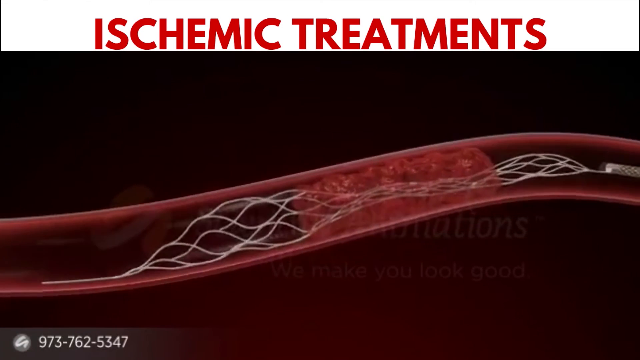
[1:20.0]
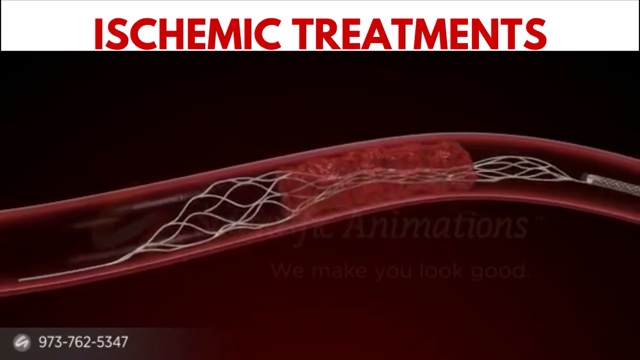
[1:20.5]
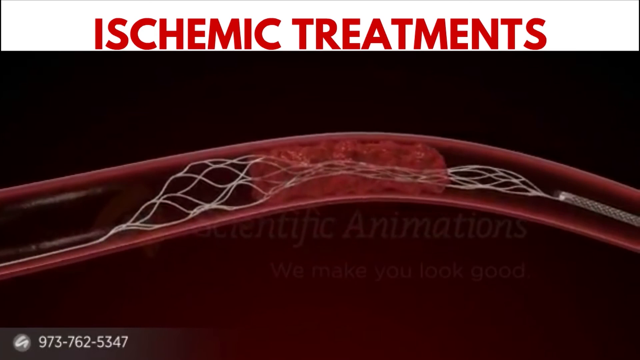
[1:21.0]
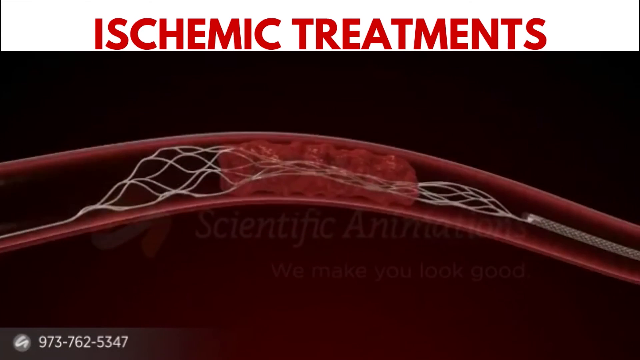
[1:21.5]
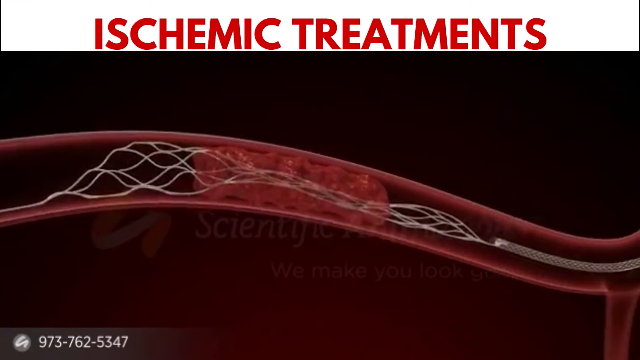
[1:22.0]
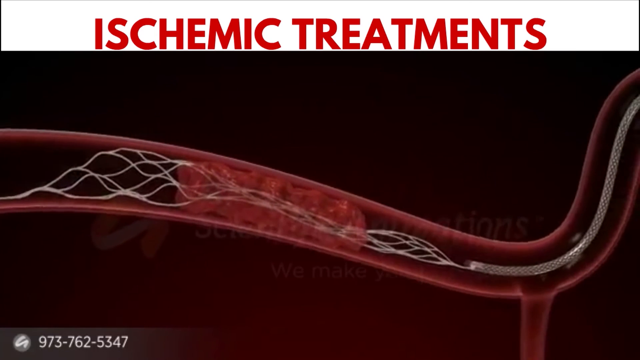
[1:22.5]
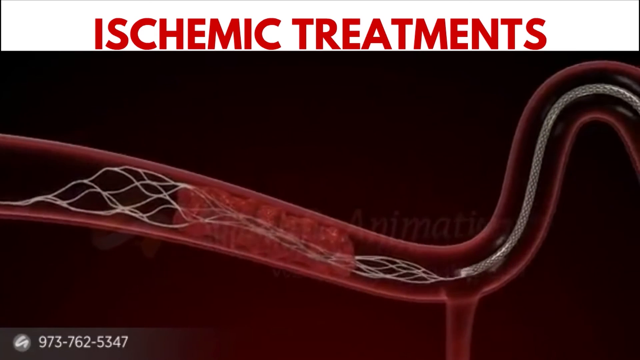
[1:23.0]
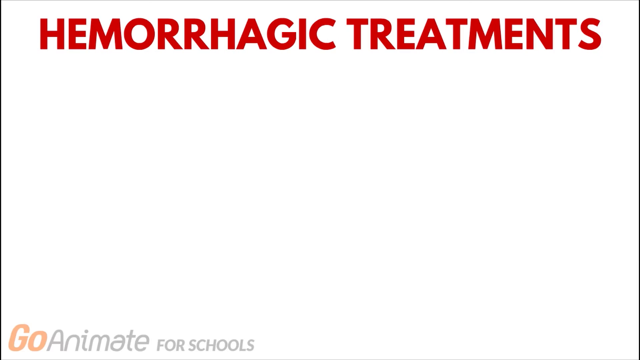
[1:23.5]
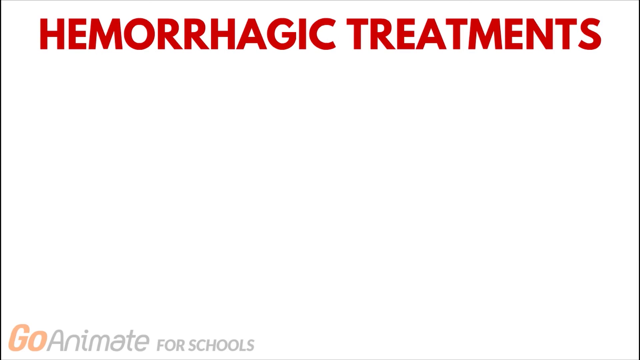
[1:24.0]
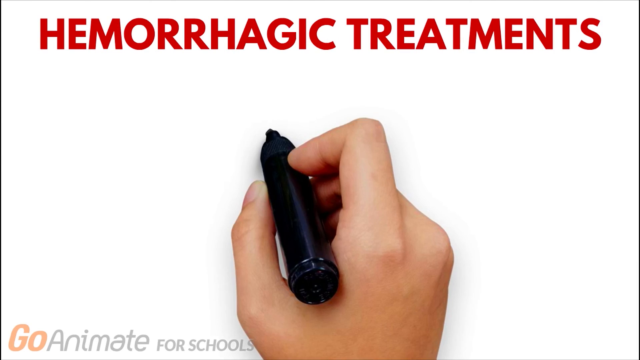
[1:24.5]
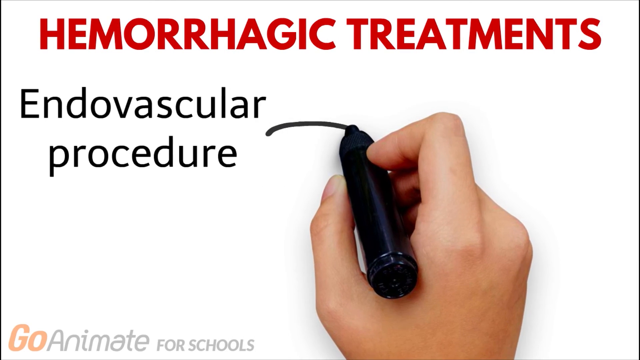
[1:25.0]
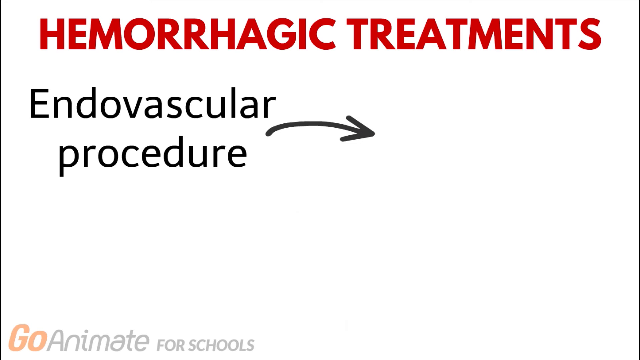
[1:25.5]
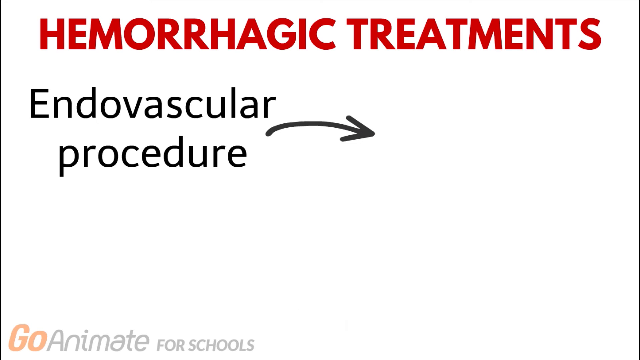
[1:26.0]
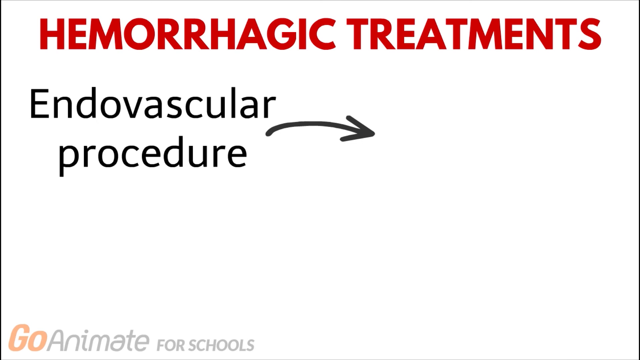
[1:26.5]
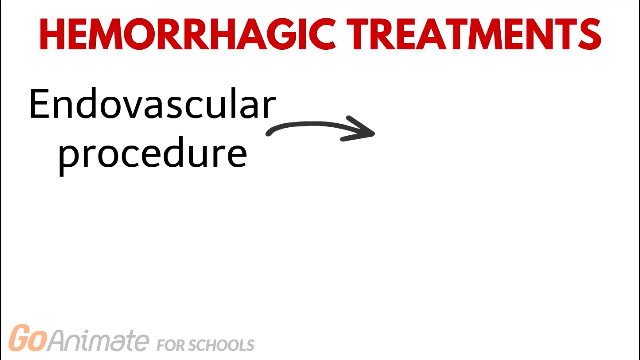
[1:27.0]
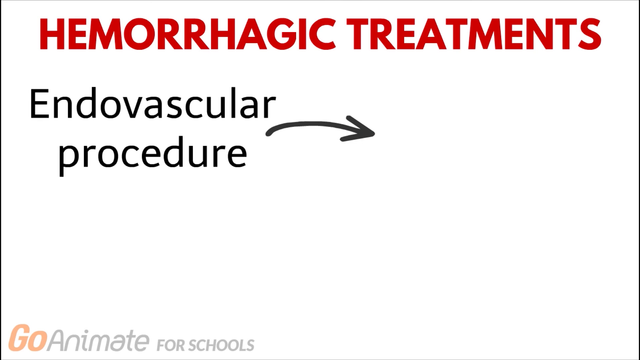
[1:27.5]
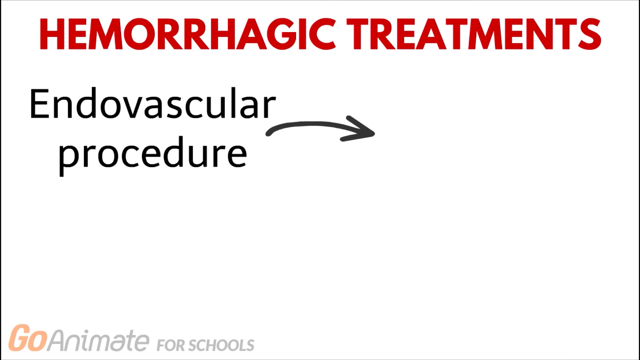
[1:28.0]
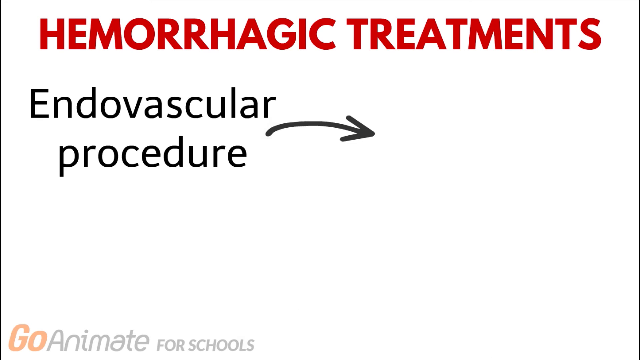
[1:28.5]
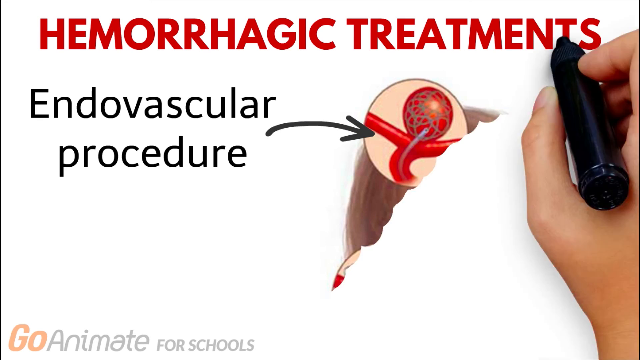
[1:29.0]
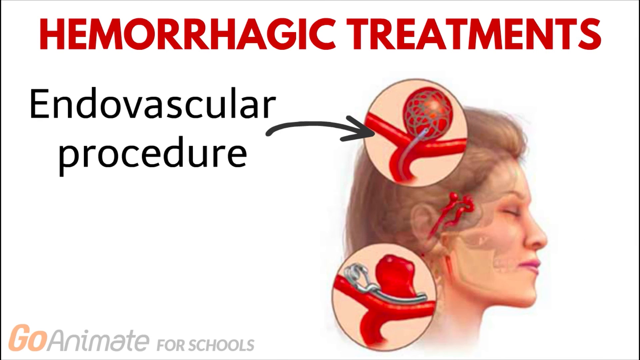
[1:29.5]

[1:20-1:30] A picture of a vein shows it open on the right side and on the left side and closed in the center of the screen, with "ischemic treatments" in red at the top. The vein moves, and movement through the vein is shown. Then a white screen appears with red text at the top saying "hemorrhagic treatments," and a Caucasian hand with a black marker writes "endovascular procedure" with an arrow pointing toward the right. The hand draws the face of a female patient with her eyes closed, with an anatomical picture over the top of her head showing a vein that has hemorrhaged and is no longer straight, with a balloon-like shape coming off the top of it. There is another anatomical picture at the bottom of her hair. Then the screen says "ischemic treatments" and shows an open vein with webbing on the left and right sides of the vein.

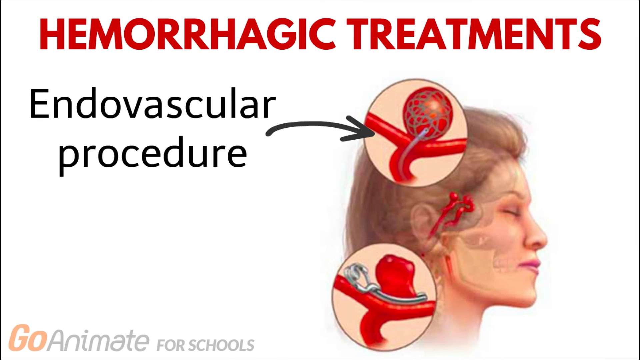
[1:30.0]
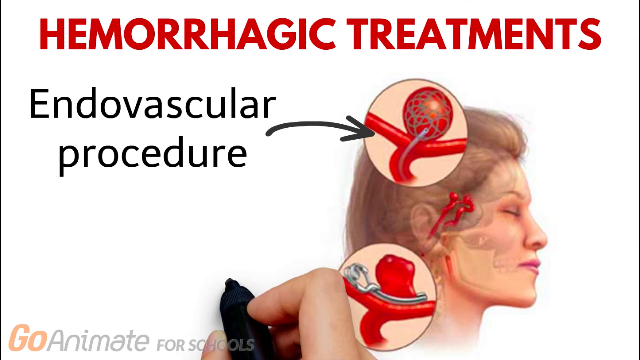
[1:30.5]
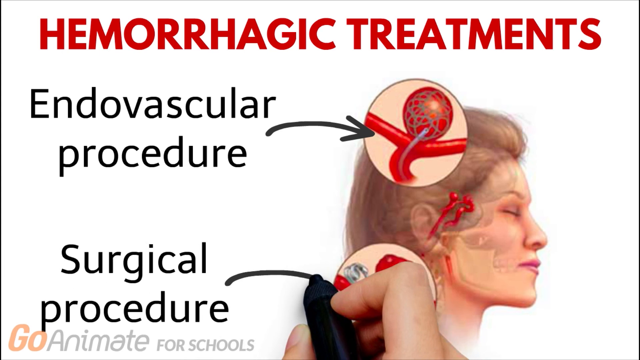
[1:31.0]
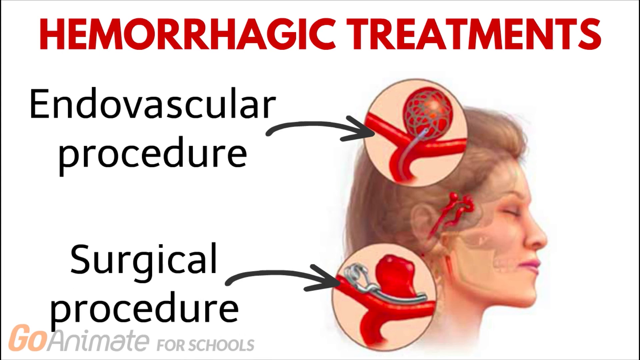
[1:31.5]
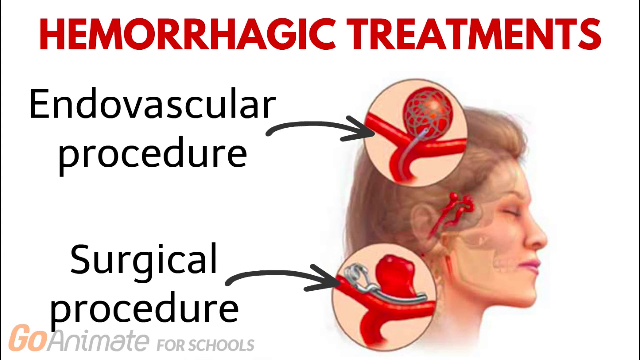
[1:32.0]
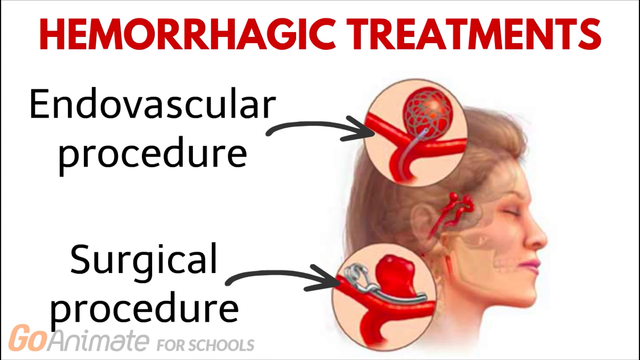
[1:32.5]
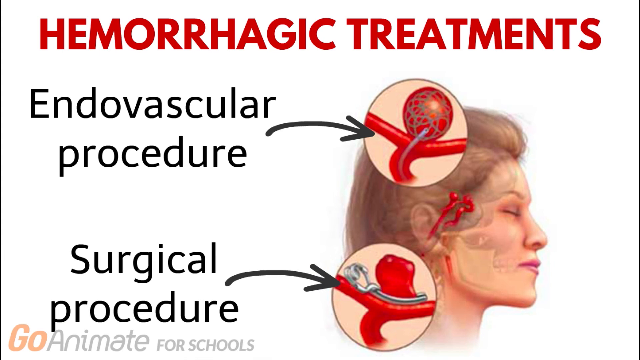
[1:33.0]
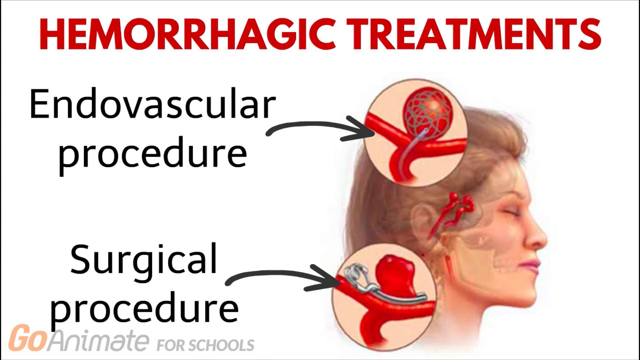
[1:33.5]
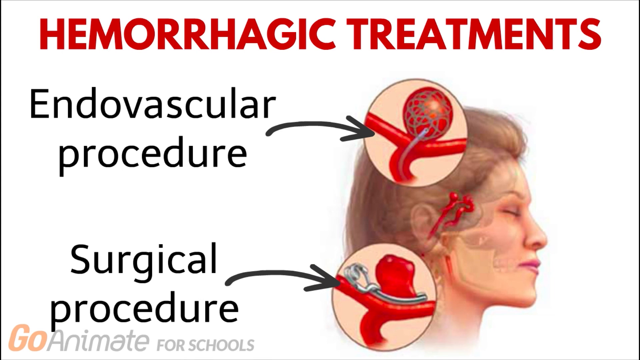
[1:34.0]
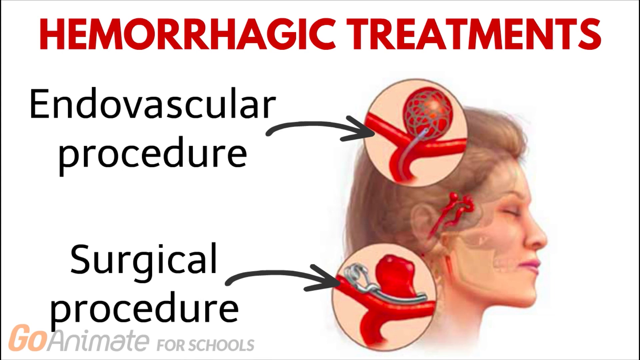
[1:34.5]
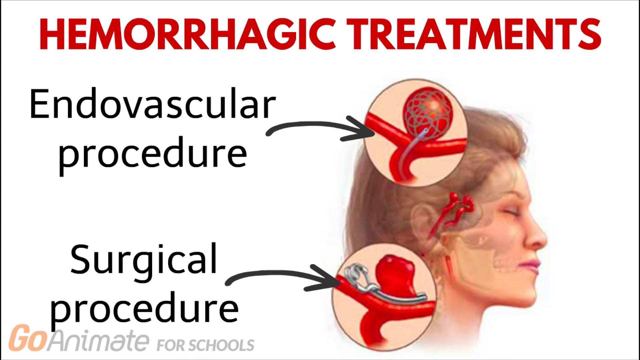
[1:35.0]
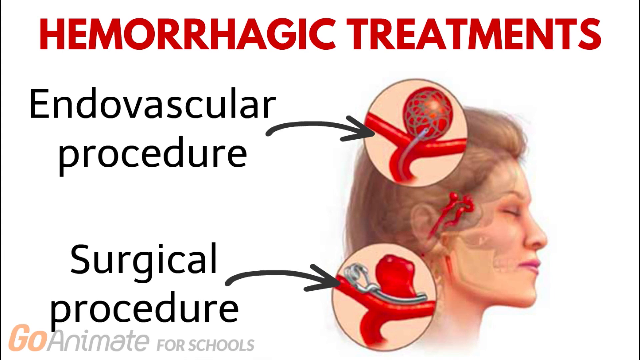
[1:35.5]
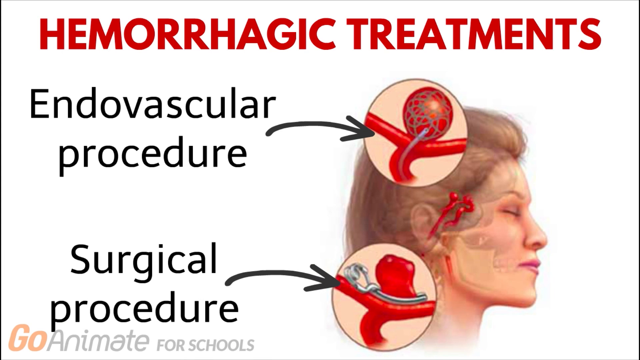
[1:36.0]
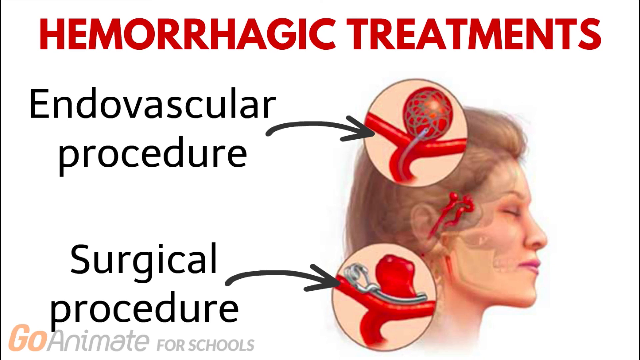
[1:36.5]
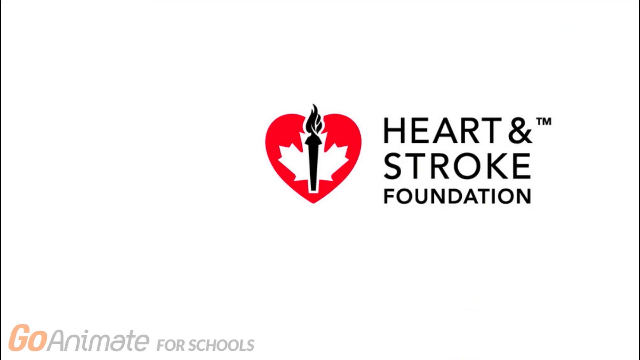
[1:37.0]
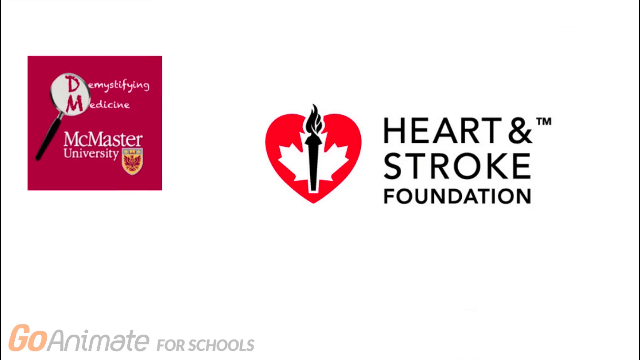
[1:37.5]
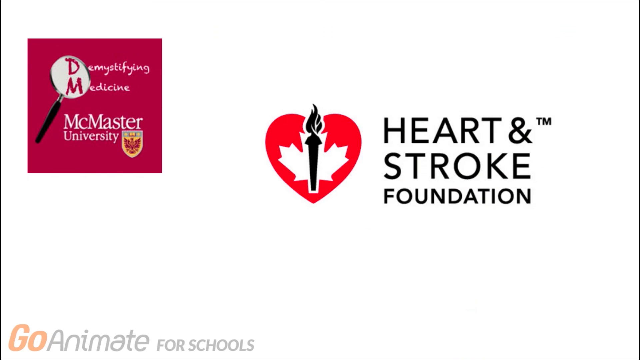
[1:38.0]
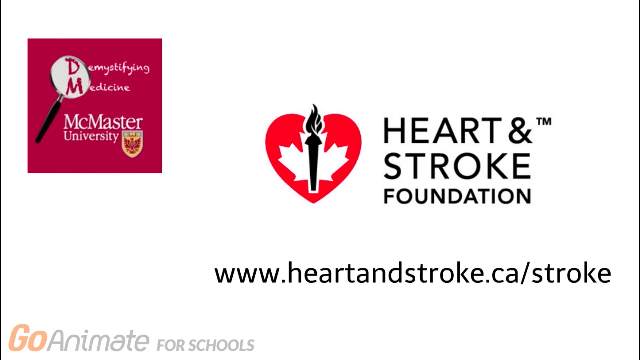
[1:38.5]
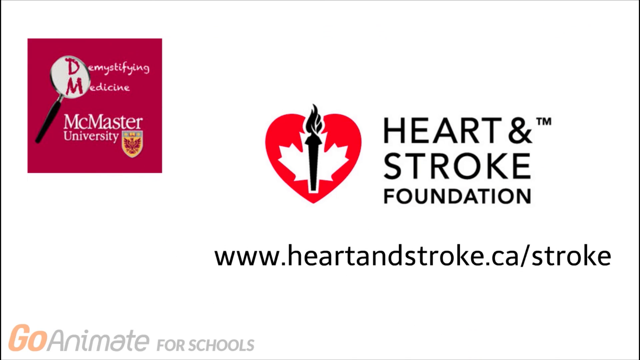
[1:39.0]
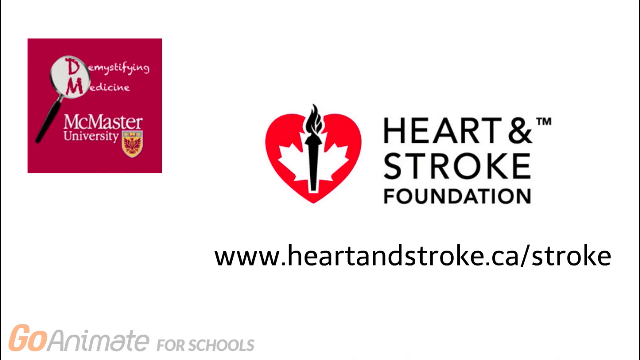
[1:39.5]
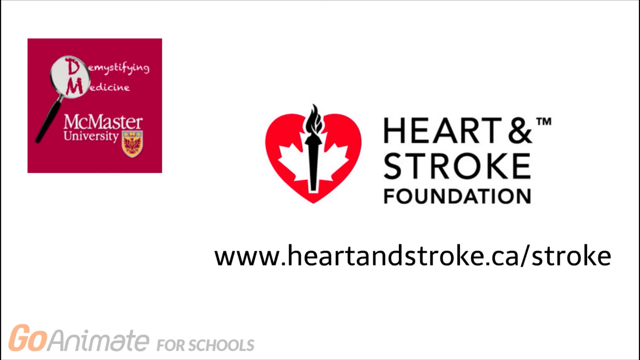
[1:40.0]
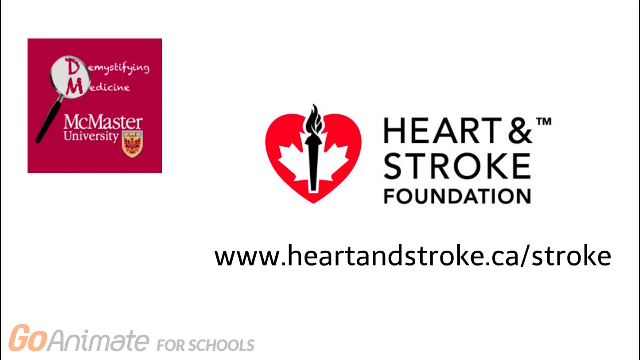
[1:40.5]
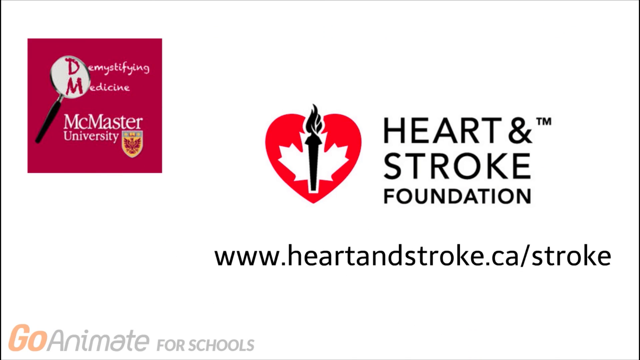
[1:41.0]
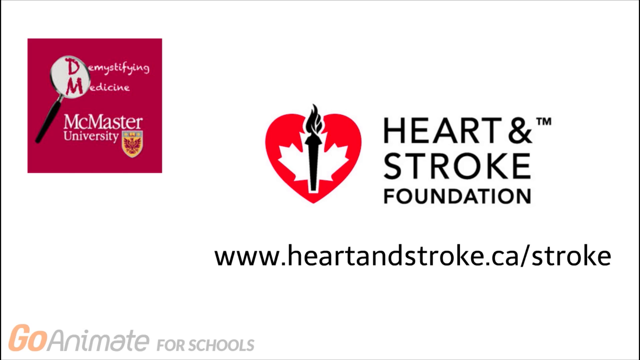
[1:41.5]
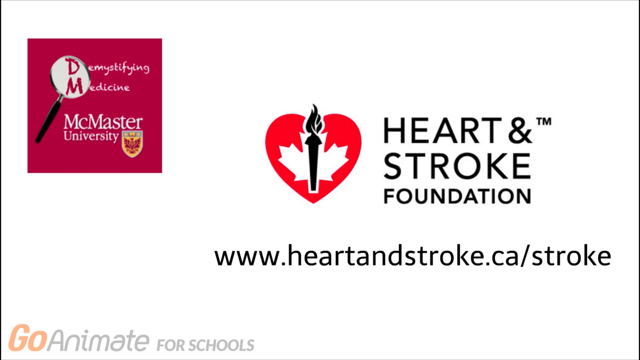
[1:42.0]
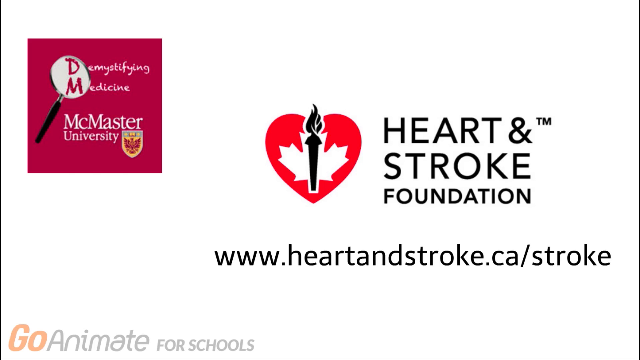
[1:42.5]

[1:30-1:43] Red text at the top says "hemorrhagic treatments." On the left, underneath that title, is "endovascular procedure" with a black arrow pointing to the right. In the bottom right corner is a drawing of a human face that looks to be a woman. At the top of her head is a vein that appears to have a hemorrhage at its top, forming a circle, and at the bottom is another anatomical drawing of hemorrhagic treatments with an endovascular procedure. The human hand comes in, writes "surgical procedure" and points an arrow to the bottom anatomical picture. Then a white background appears with "demystifying medicine" written over a looking glass in the top left corner, along with "McMaster University." On the right of the screen, near the center, is a heart with a flame going through it, "Heart and Stroke Foundation," and the URL "www.heartandstroke.ca/stroke."